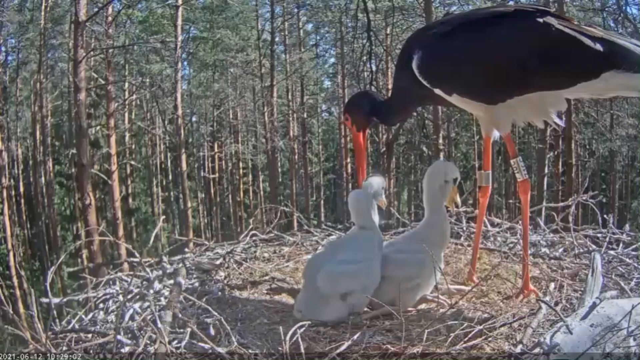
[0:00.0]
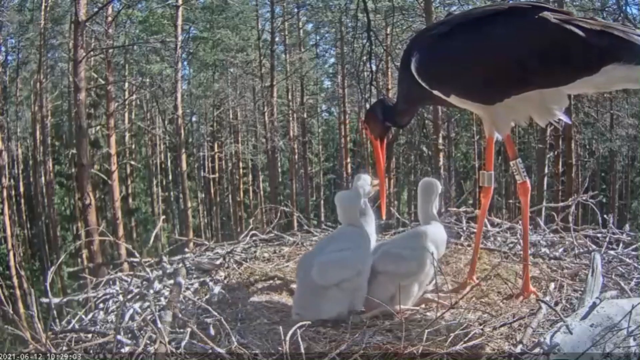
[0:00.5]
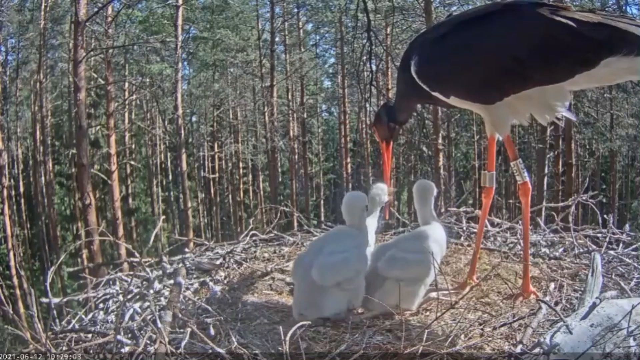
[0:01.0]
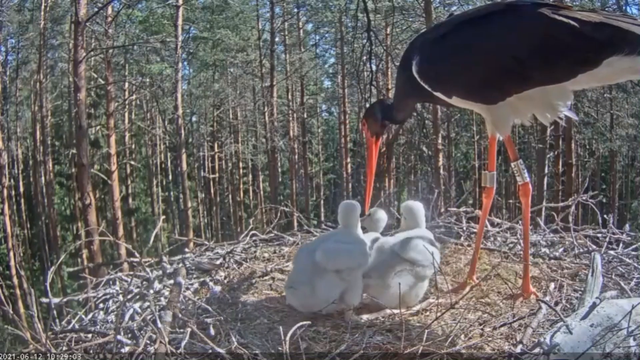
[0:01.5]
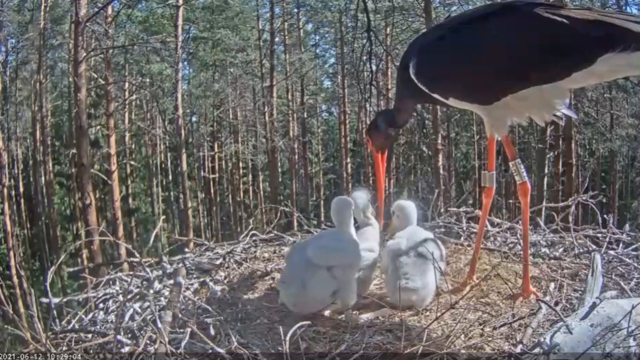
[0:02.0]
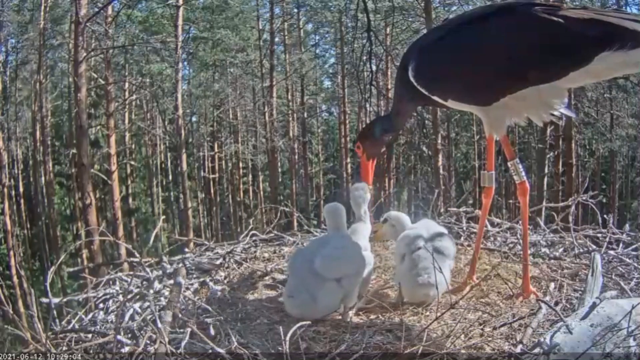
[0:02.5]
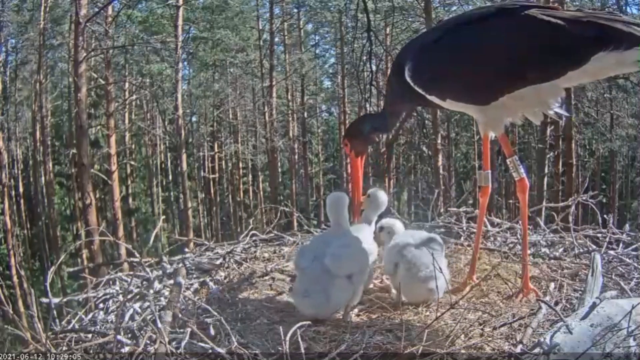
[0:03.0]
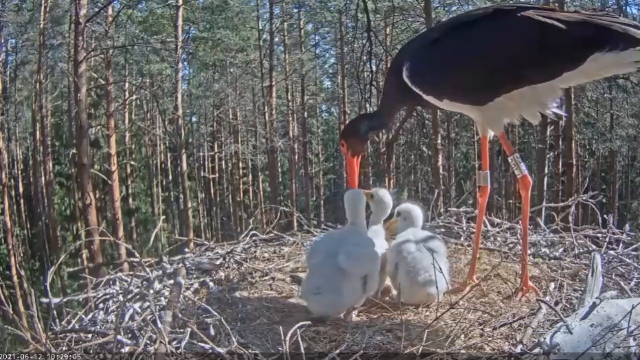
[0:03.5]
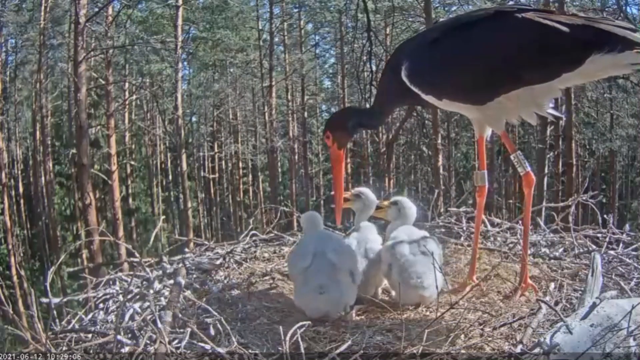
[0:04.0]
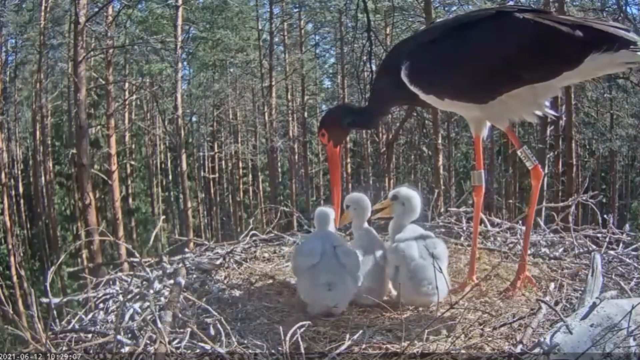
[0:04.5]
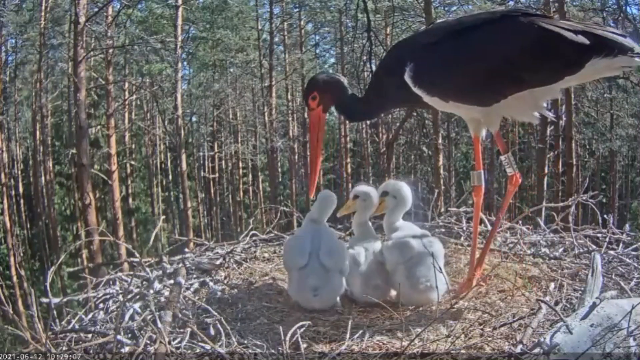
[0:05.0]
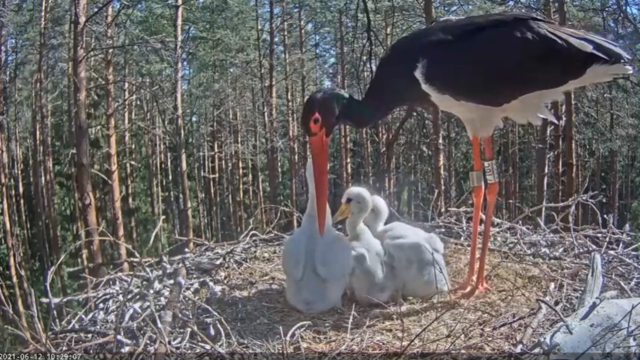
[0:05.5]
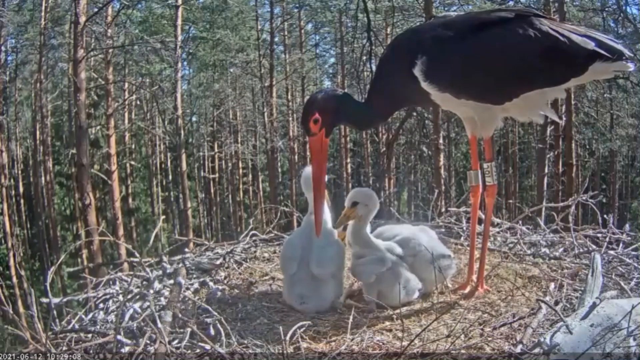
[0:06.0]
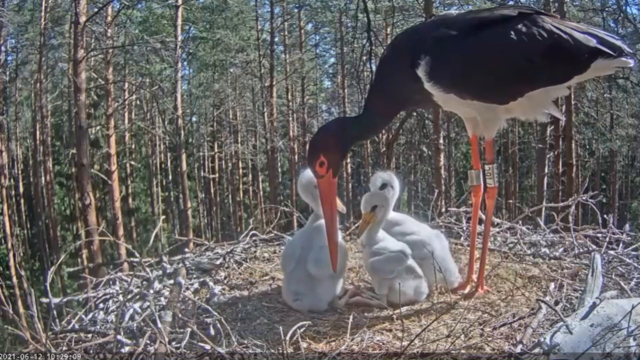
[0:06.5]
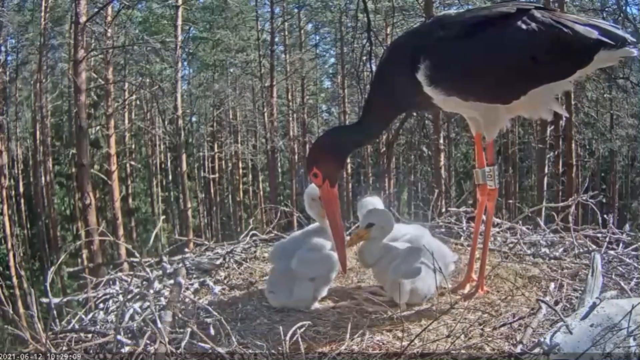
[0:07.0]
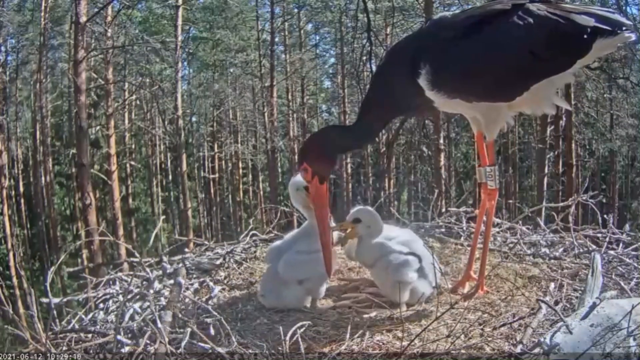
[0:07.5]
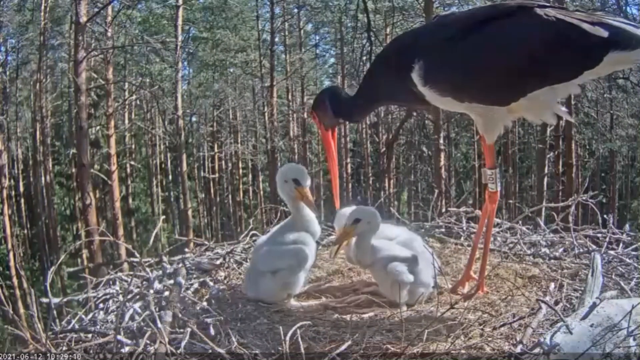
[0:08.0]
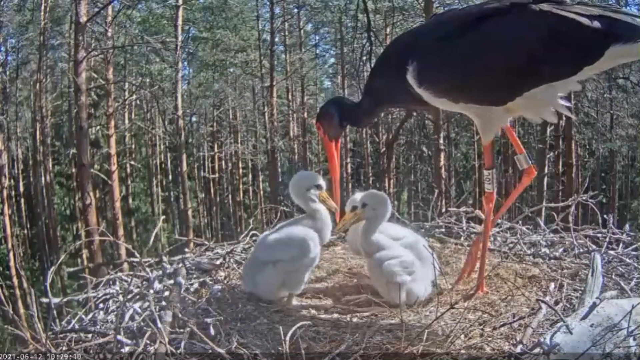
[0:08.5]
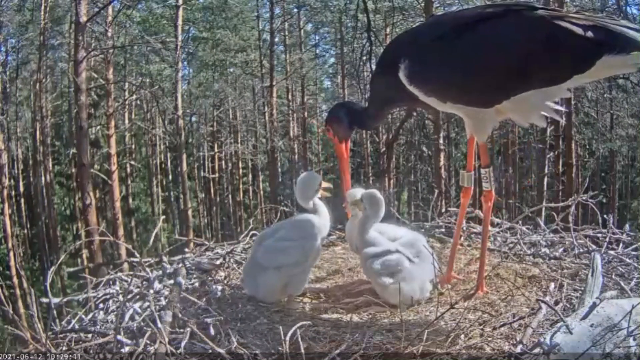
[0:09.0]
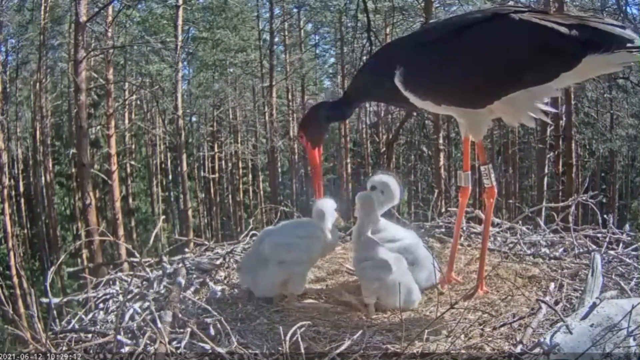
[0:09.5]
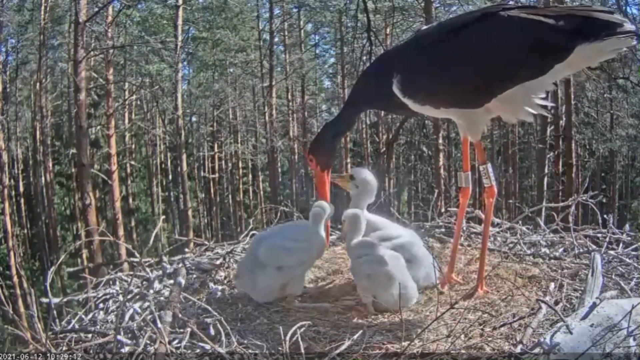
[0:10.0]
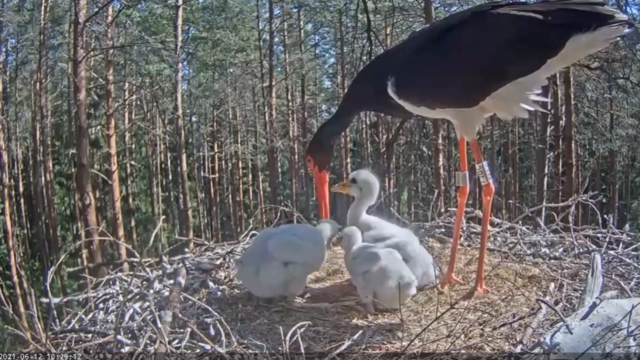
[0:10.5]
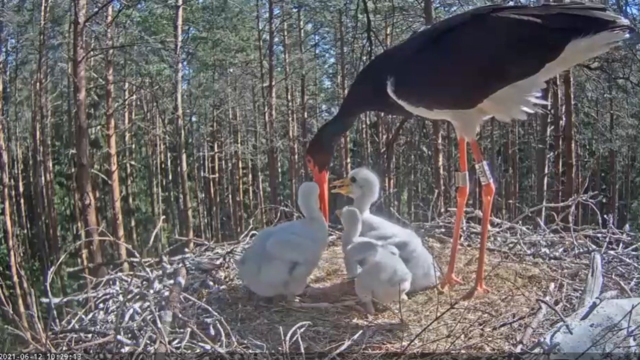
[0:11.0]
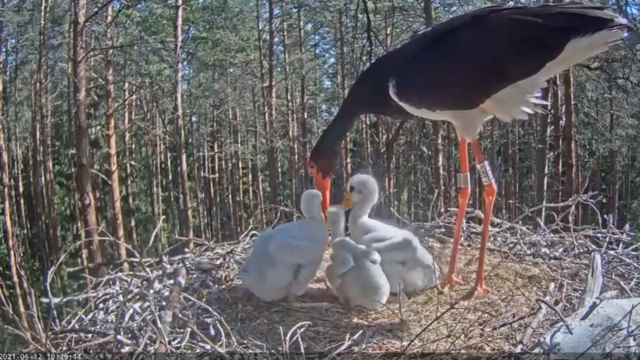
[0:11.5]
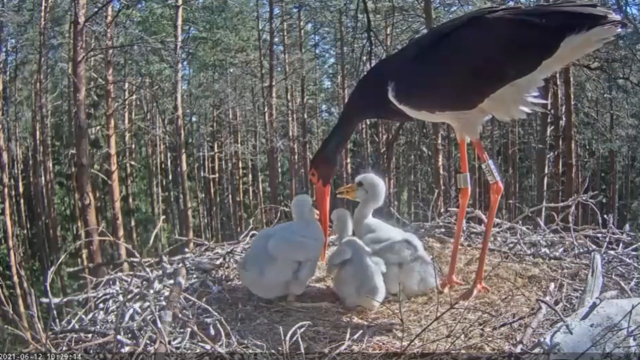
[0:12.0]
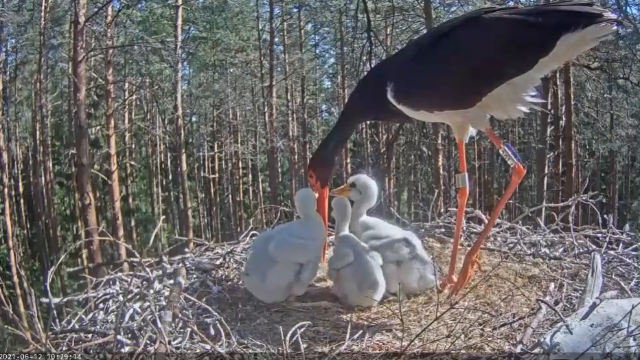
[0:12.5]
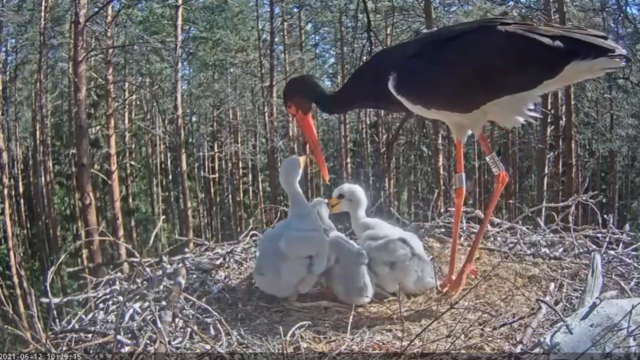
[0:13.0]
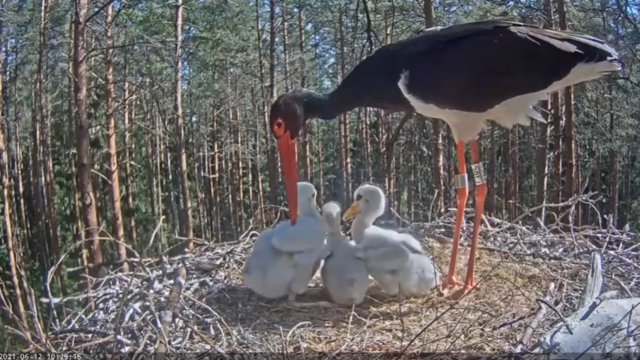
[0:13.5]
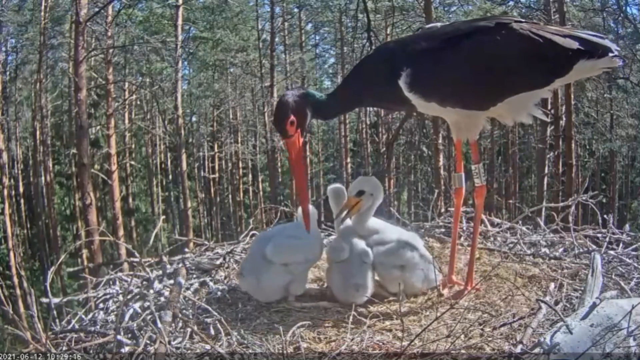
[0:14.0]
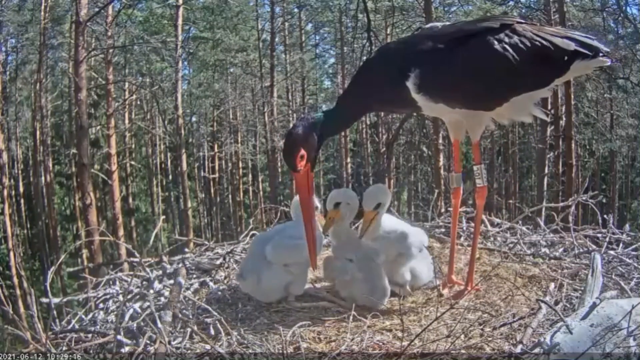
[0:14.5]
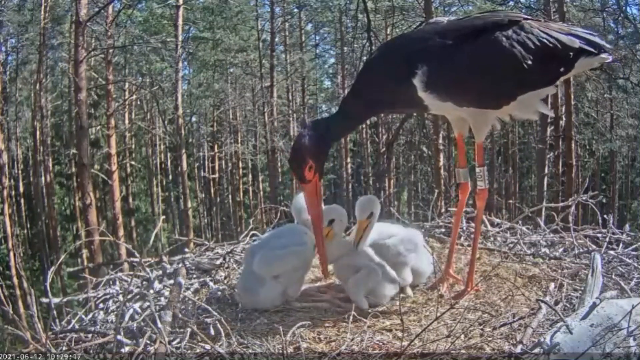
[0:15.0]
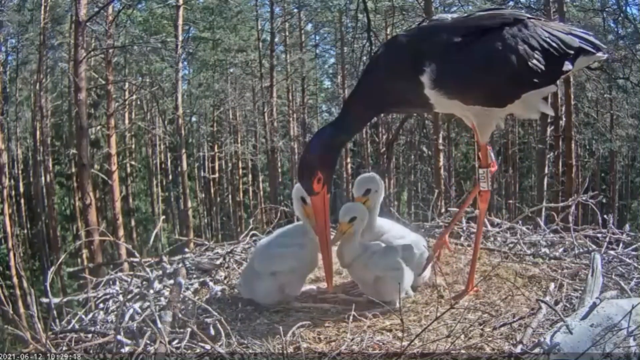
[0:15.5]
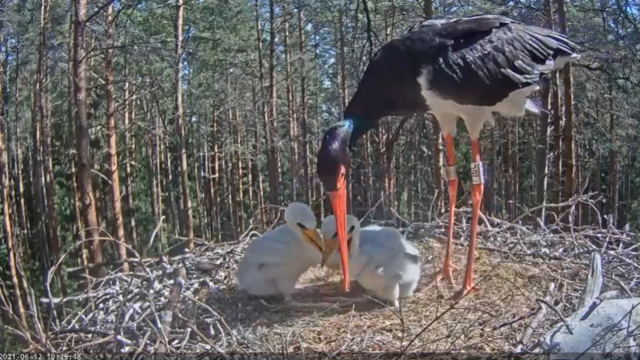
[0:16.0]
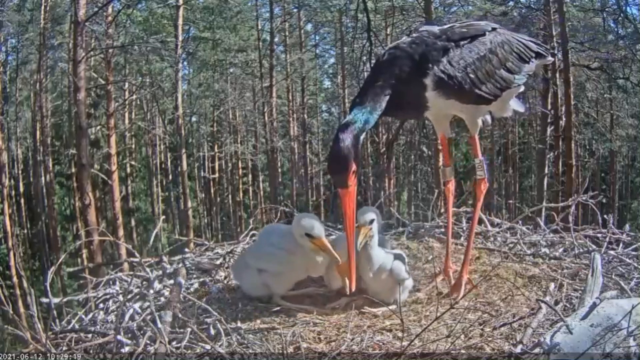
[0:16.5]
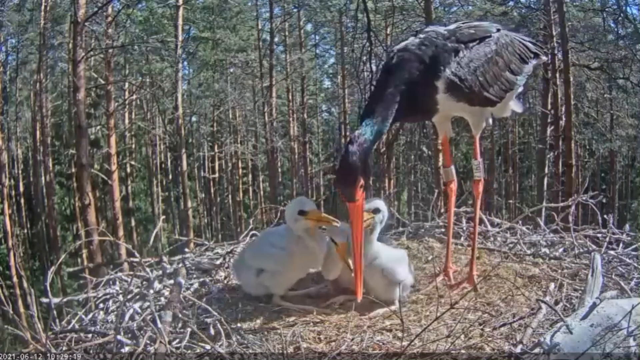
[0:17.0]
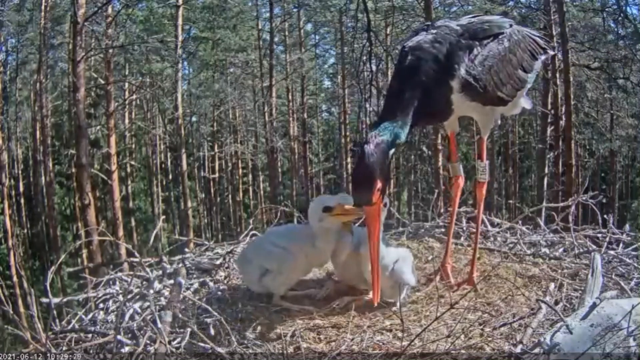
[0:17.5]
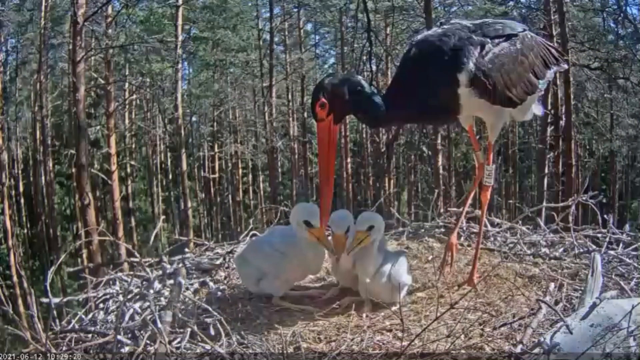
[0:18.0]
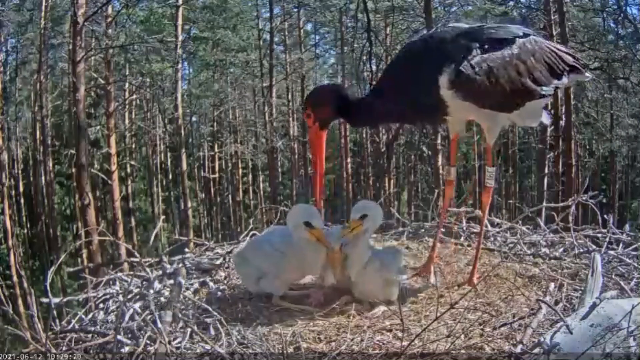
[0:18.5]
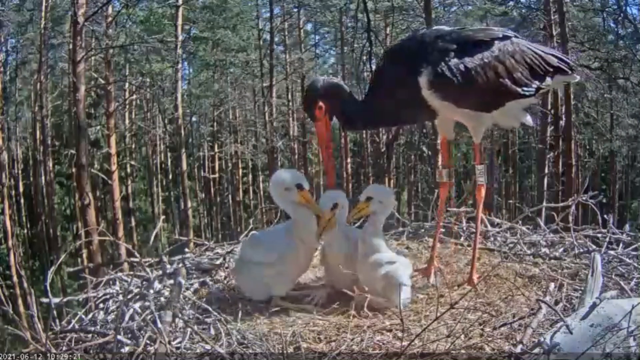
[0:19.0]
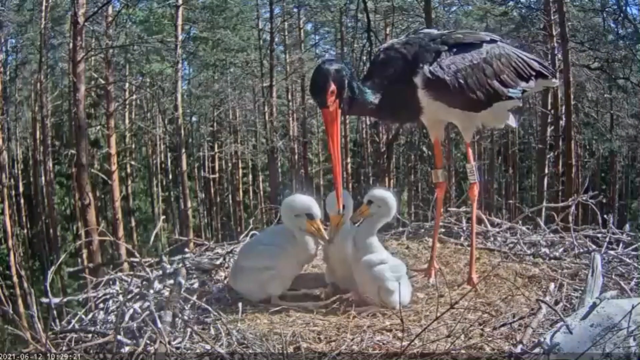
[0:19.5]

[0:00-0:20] A tall mother bird, maybe some kind of crane, stands over a nest of three babies, seemingly checking on them and maybe feeding them. The mother bird is all black on top and white underneath, with orangish-red legs and a very long, pointy red-orange beak. The babies do not look quite like the mother: they are all white, with short legs, and they kind of hobble around since they are so young. Their beaks are yellow, their eyes are black, and their bodies are mostly fluffy white, with a few portions looking a little grayish. The setting is a foresty area, and the nest appears to be made of twigs along with some fluffy, soft twigs.